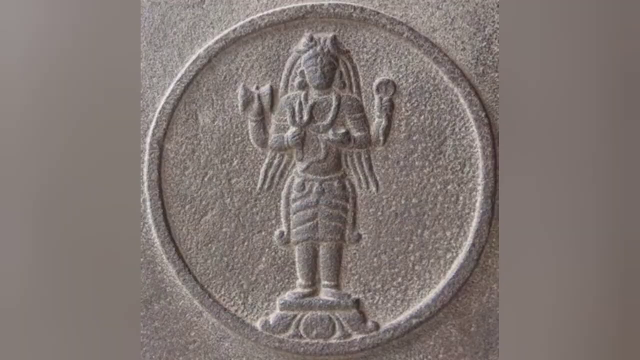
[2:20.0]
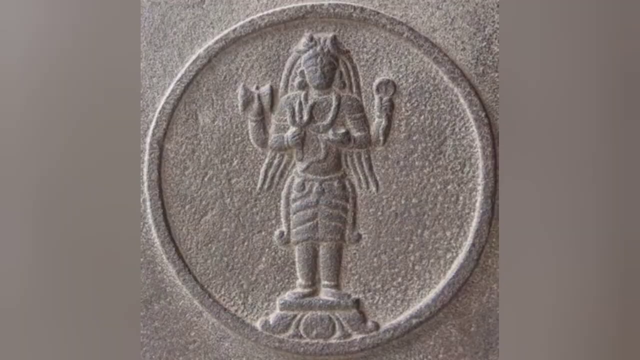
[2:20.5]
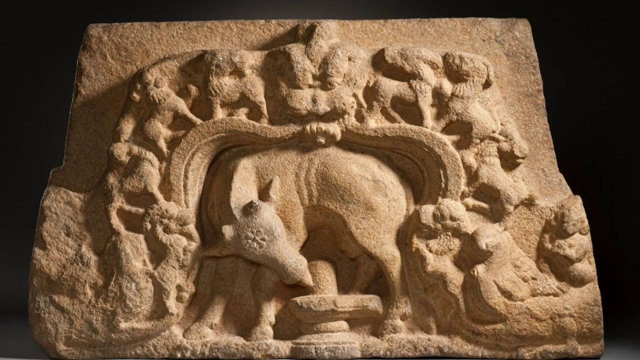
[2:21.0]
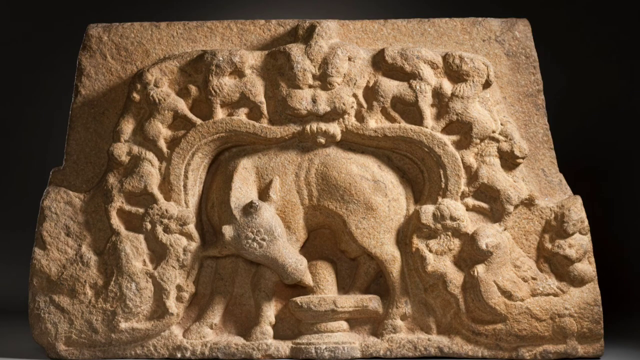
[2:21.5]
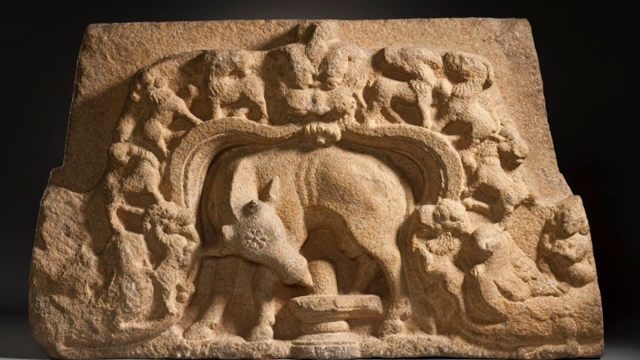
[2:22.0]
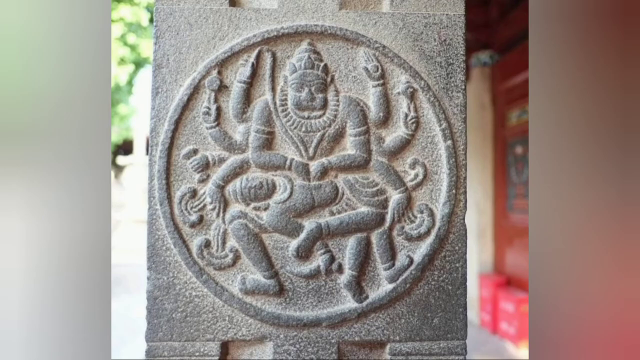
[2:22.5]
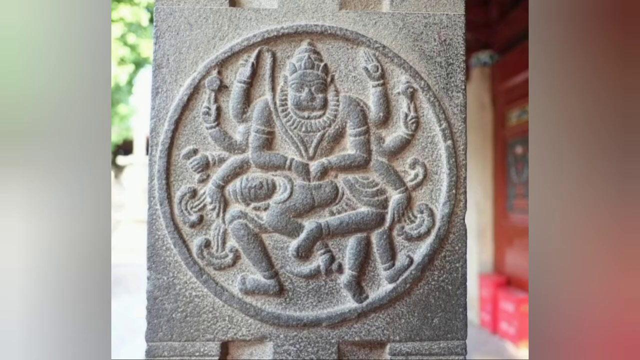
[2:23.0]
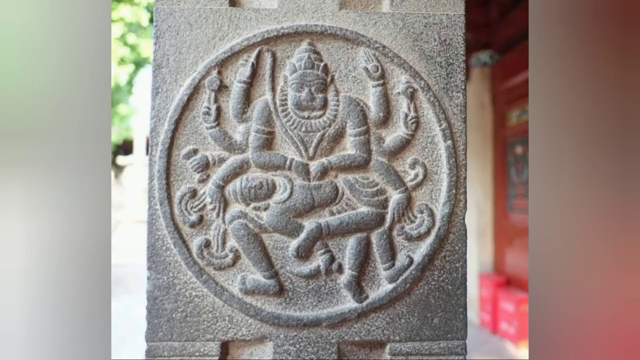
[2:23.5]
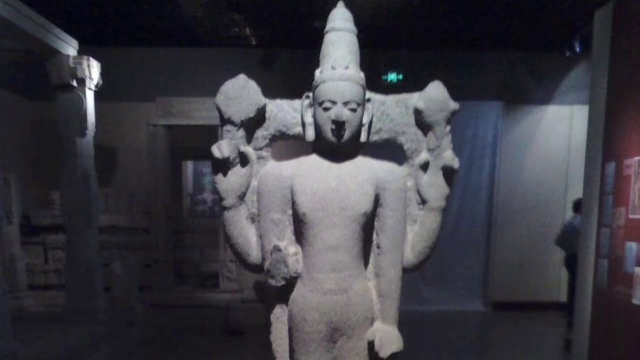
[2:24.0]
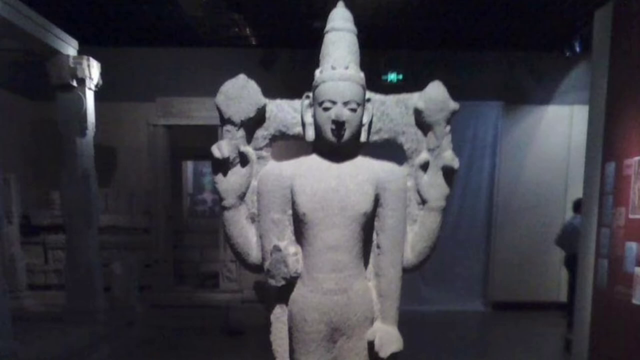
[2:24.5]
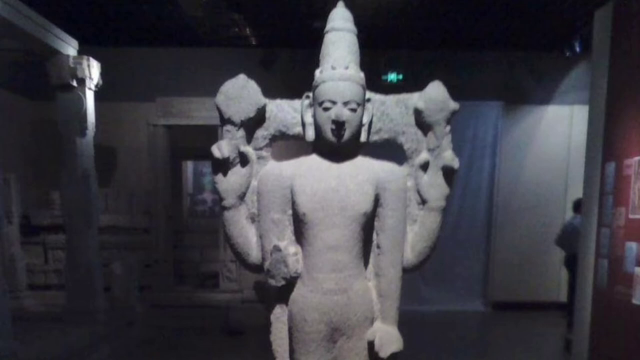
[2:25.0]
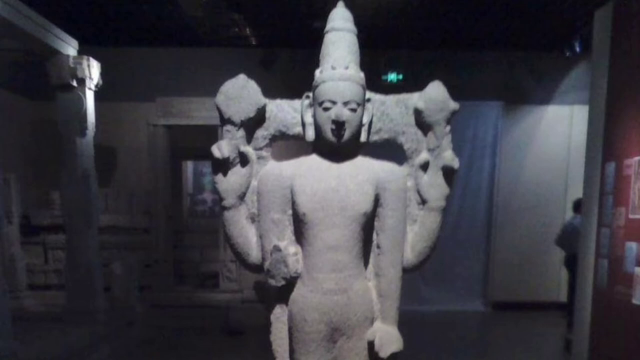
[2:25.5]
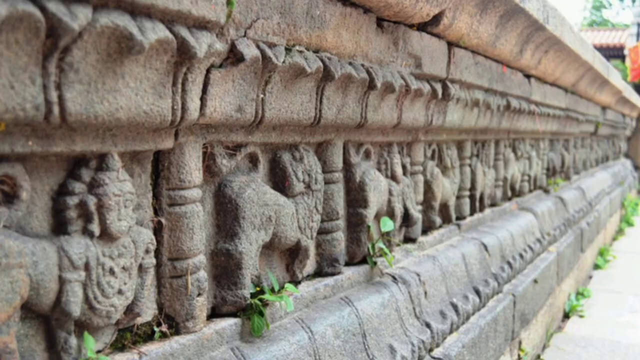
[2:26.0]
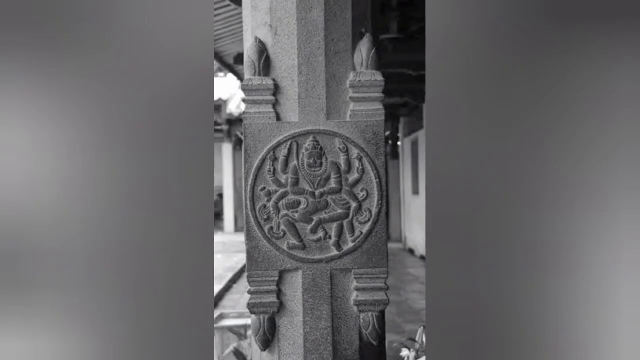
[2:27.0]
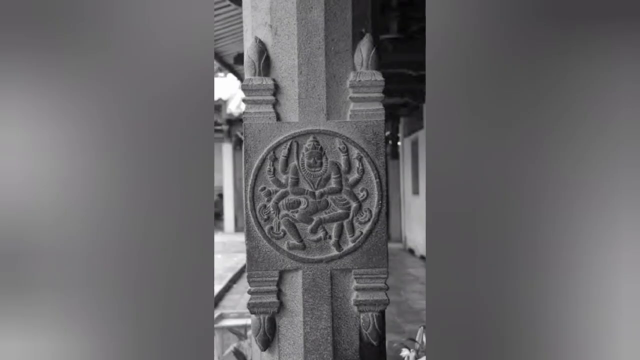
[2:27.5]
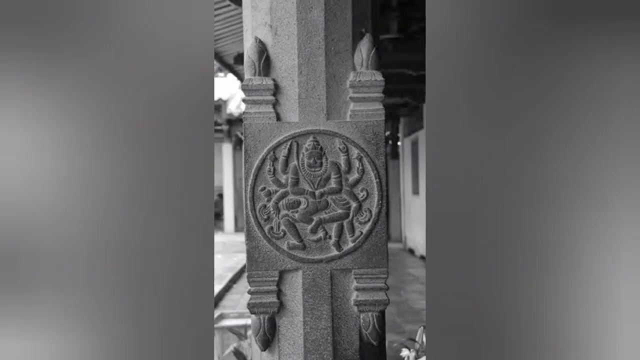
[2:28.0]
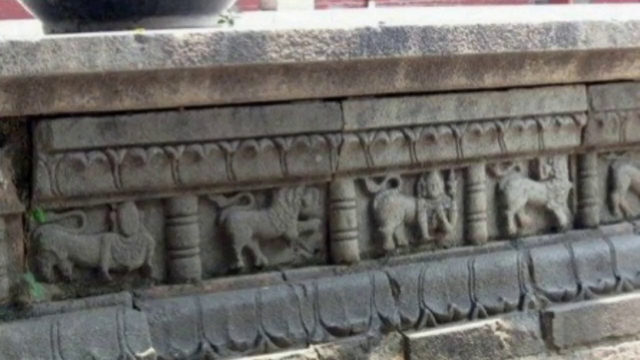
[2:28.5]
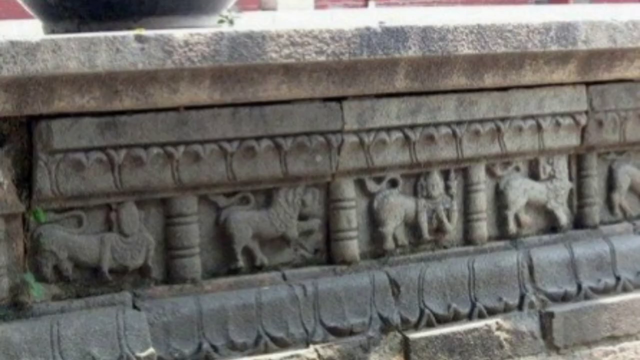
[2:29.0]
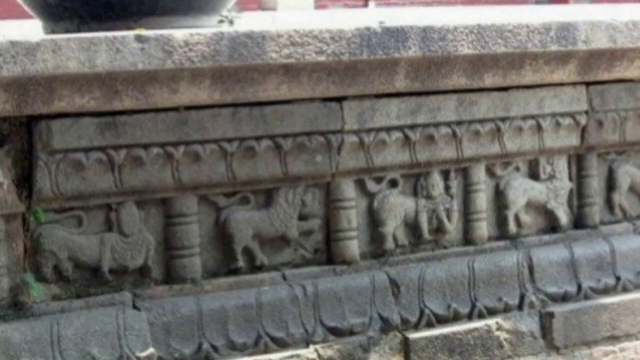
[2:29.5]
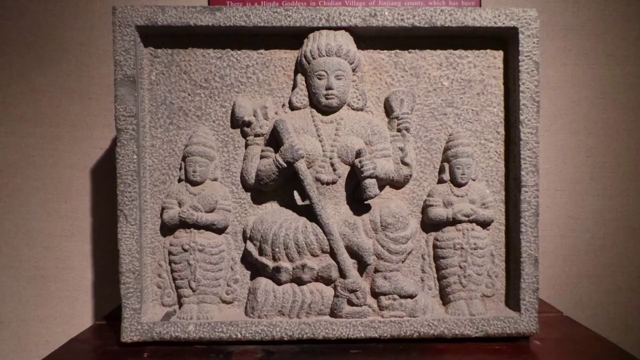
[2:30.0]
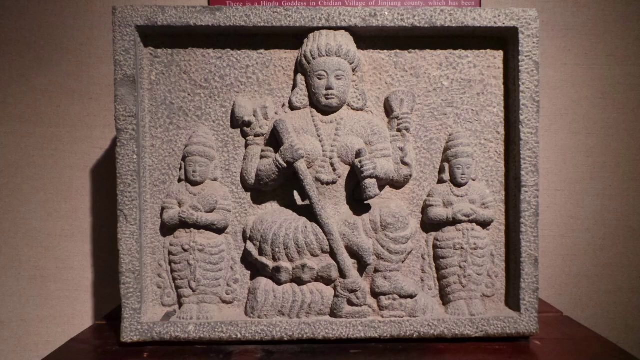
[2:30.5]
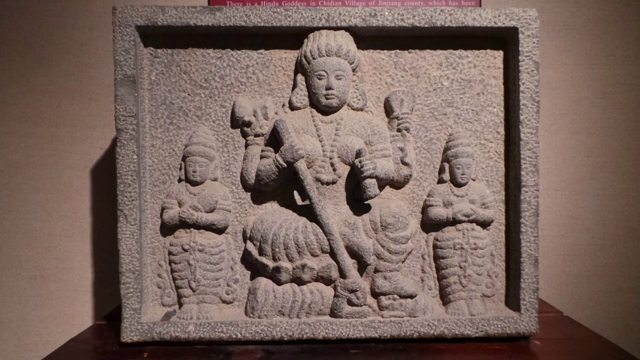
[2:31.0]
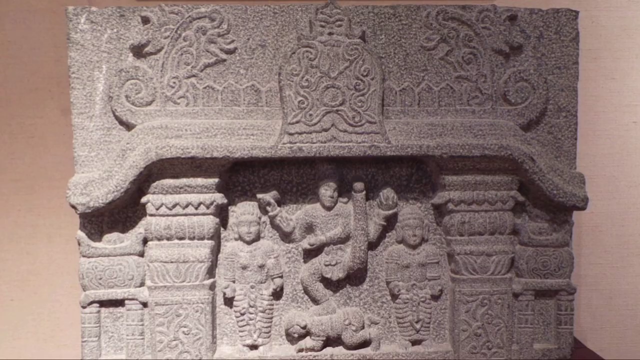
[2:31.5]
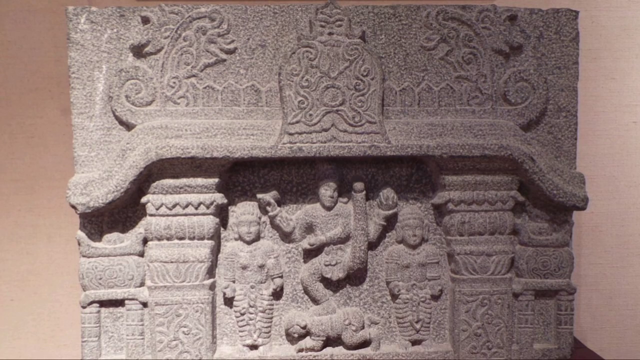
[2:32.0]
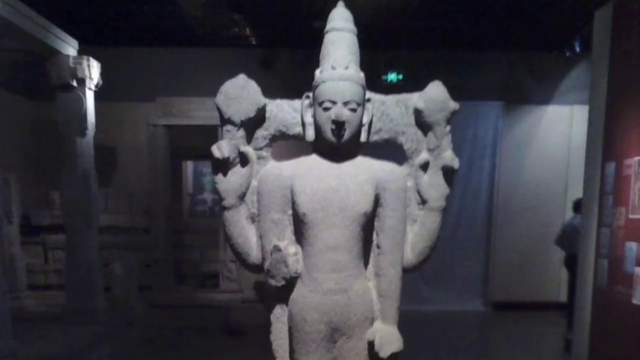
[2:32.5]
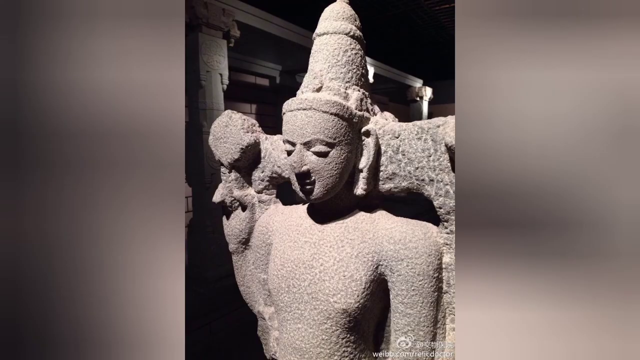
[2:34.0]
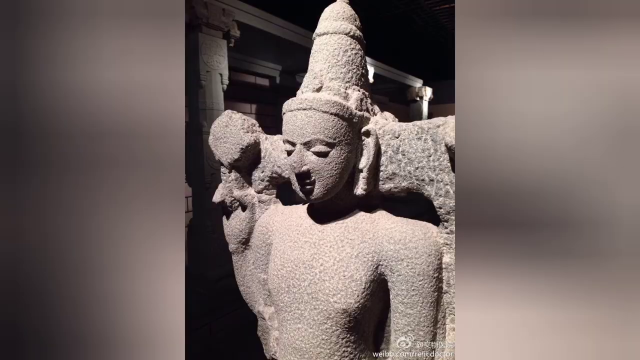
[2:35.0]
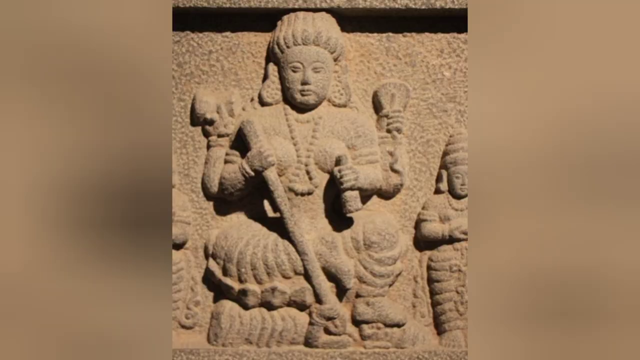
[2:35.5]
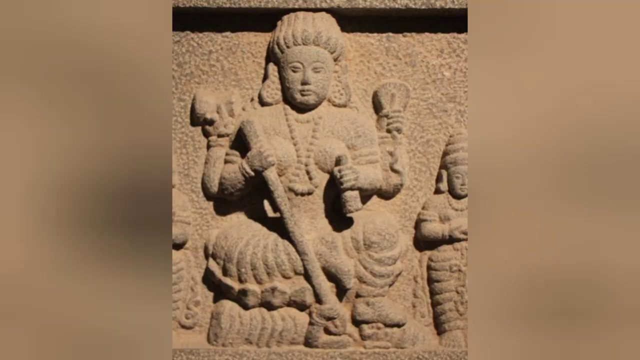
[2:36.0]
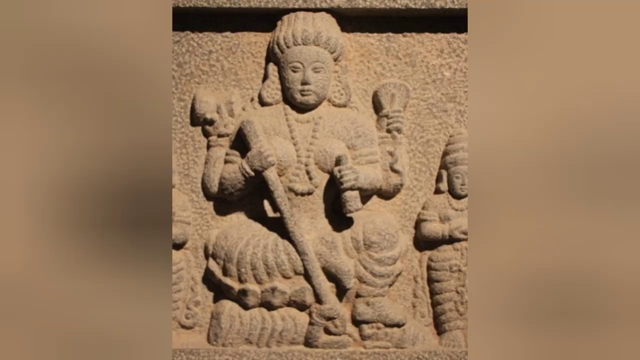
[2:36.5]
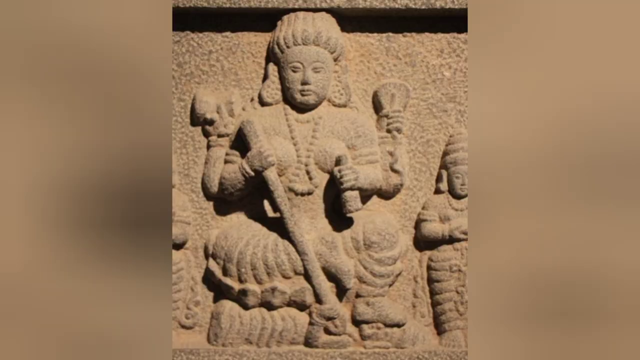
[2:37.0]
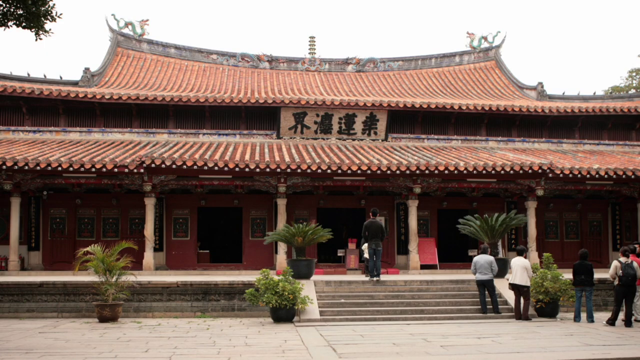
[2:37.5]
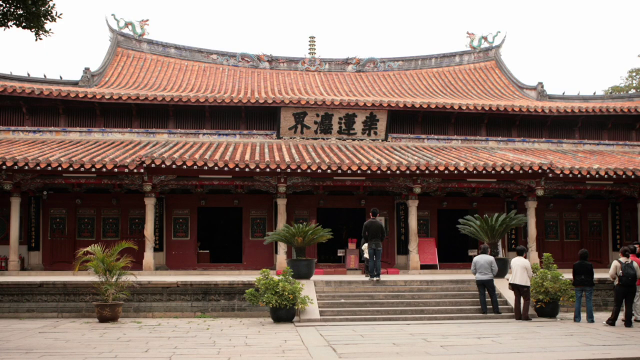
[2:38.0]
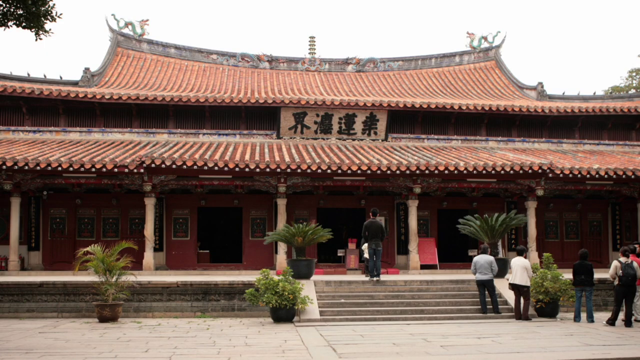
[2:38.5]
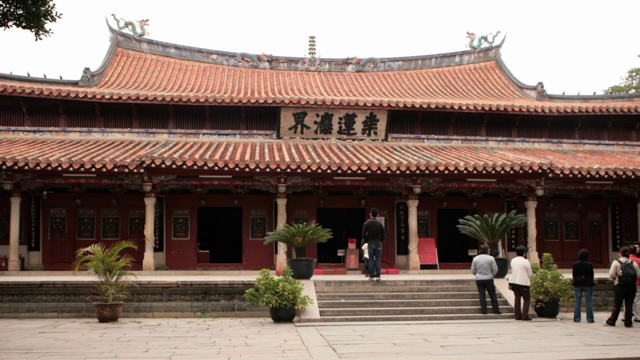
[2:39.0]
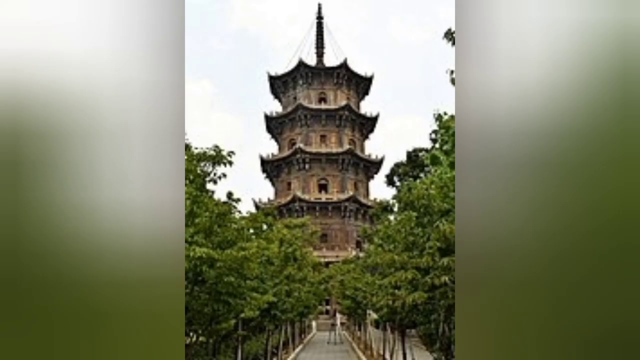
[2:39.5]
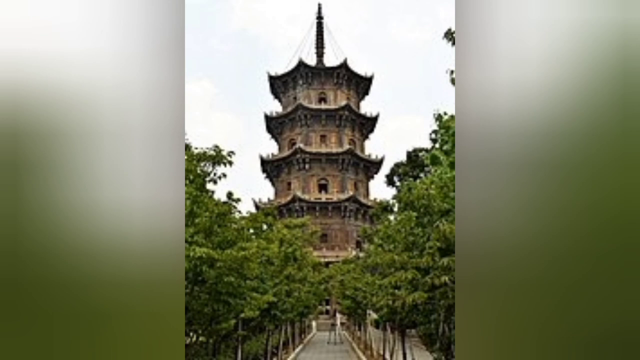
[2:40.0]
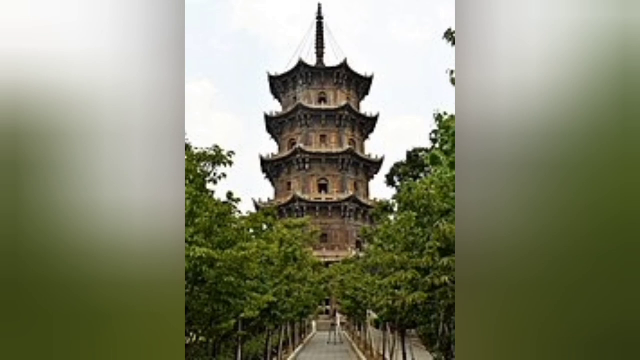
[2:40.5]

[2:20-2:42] A god-type figure is shown, followed by the animal carving seen before, which possibly depicts a cat. Then a god with about eight arms and apparently about four legs appears, in a style that looks quite Indian. A statue of an Indian god with big ears and apparently four sets of arms follows, then animal carvings. The video switches back to the god with eight arms and four legs, then shows more animal inscriptions and other statues of Indian-like figures. Toward the end, the Chinese tower and temple appear again.